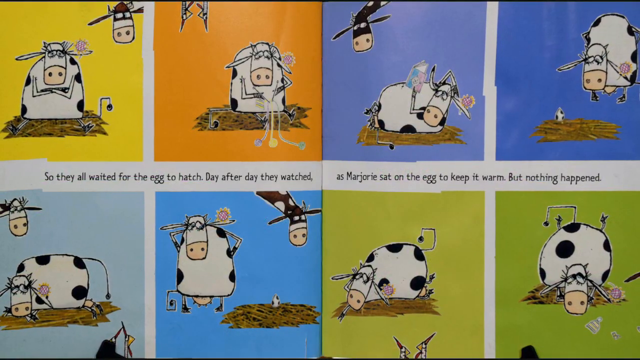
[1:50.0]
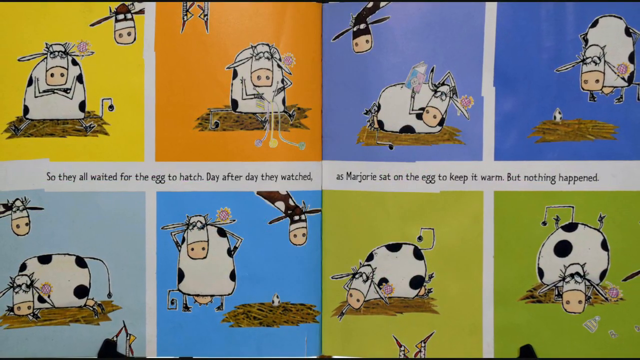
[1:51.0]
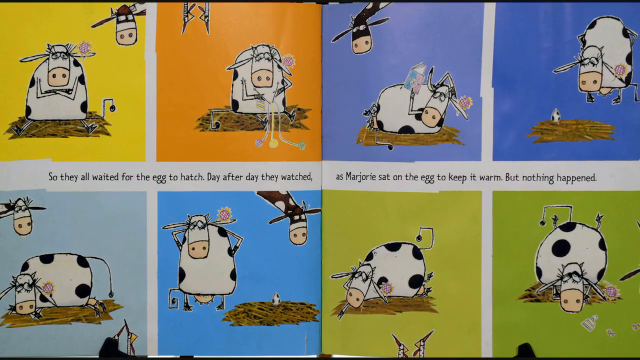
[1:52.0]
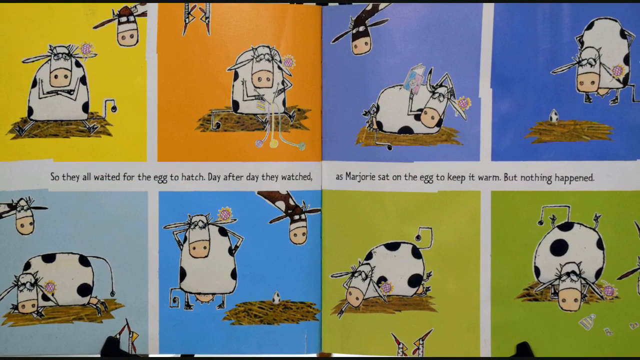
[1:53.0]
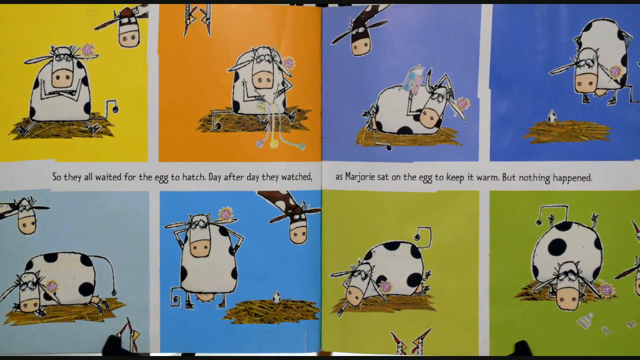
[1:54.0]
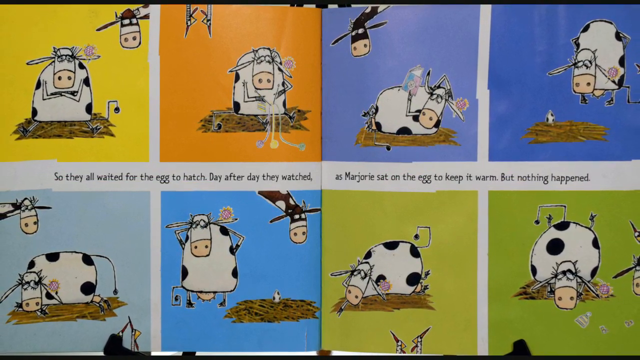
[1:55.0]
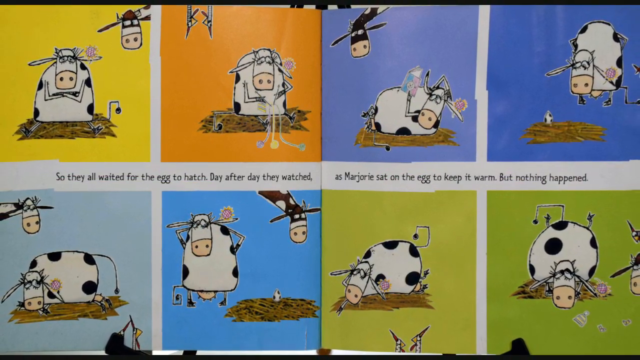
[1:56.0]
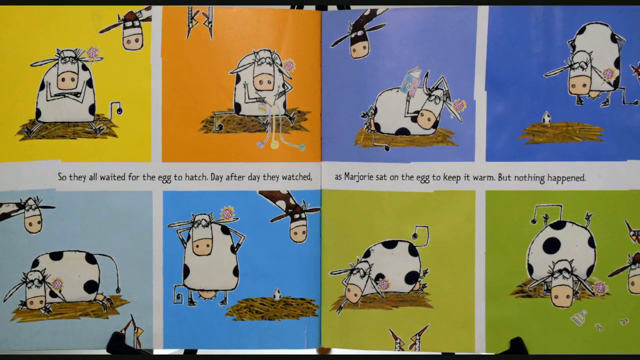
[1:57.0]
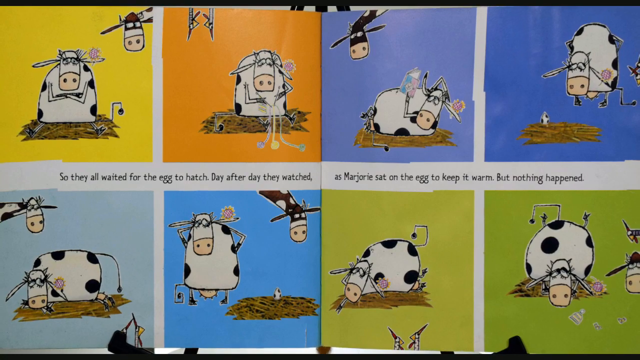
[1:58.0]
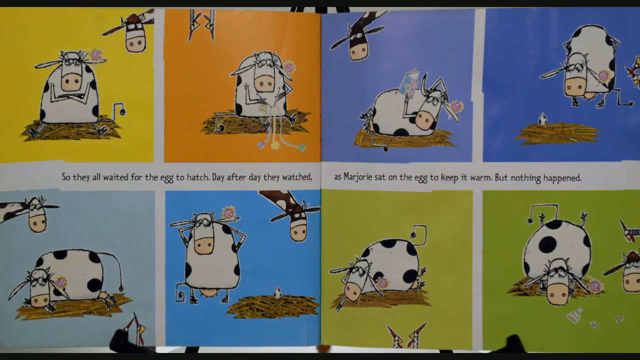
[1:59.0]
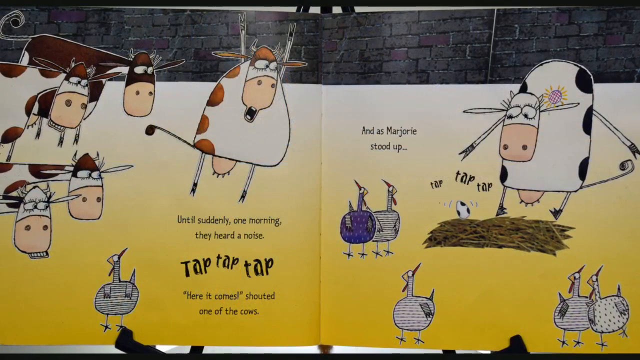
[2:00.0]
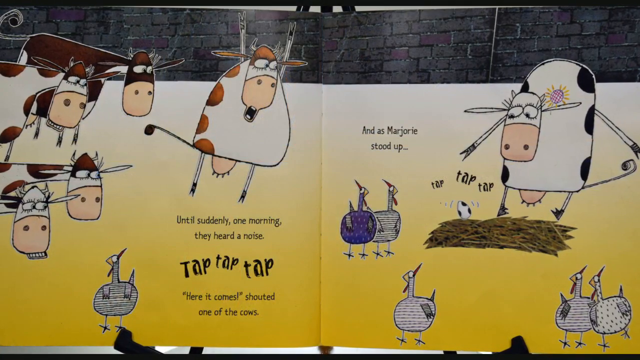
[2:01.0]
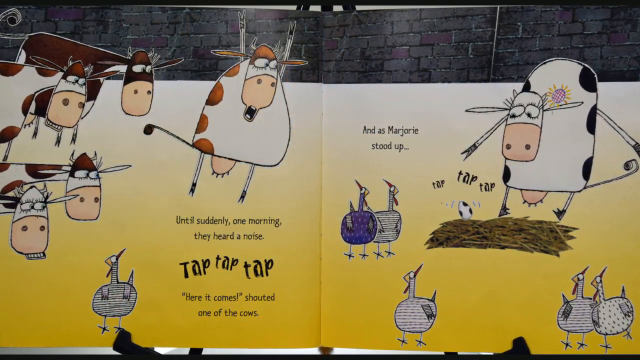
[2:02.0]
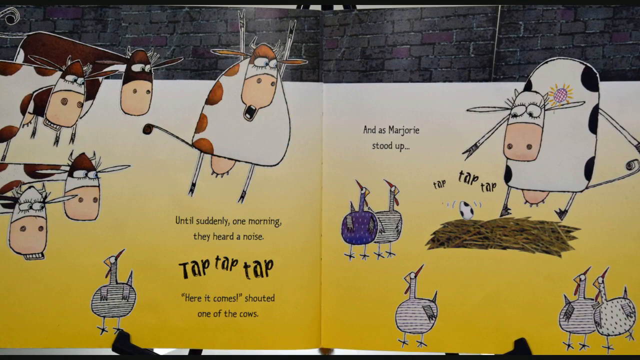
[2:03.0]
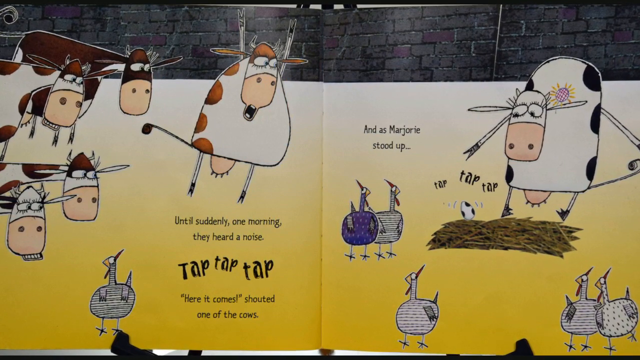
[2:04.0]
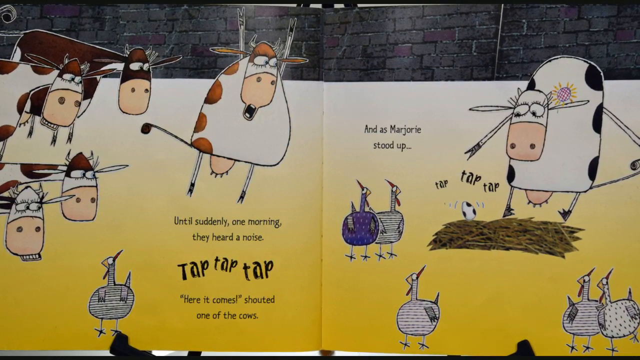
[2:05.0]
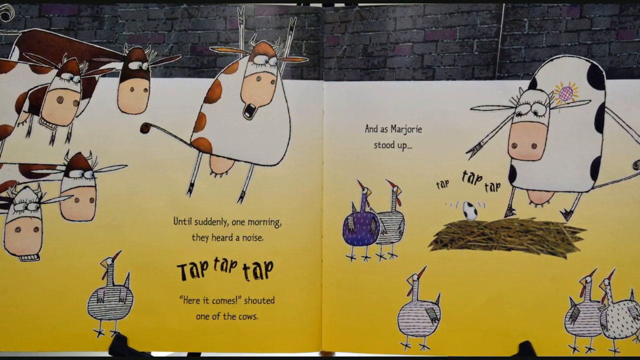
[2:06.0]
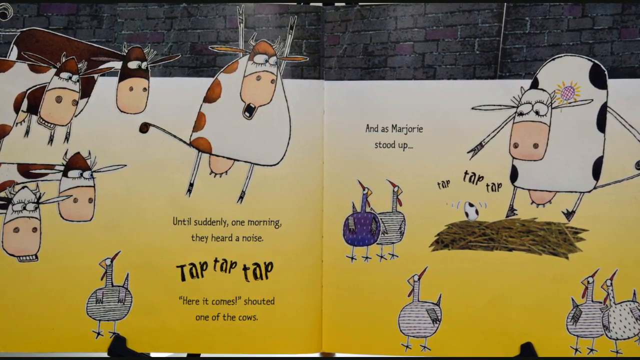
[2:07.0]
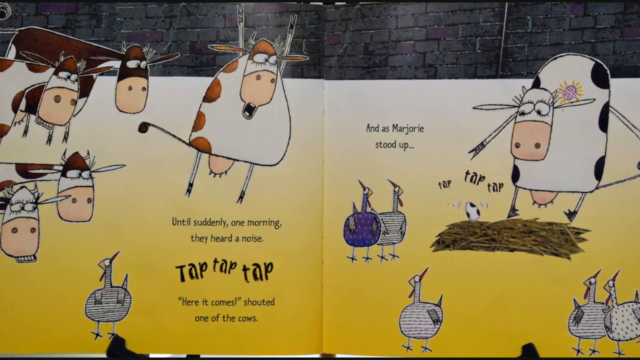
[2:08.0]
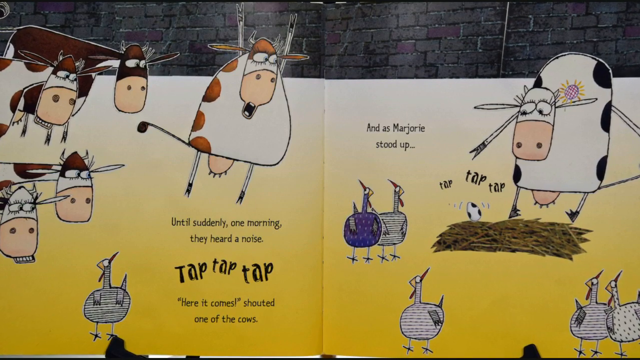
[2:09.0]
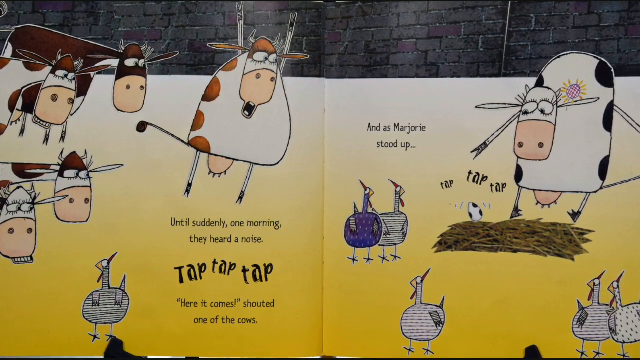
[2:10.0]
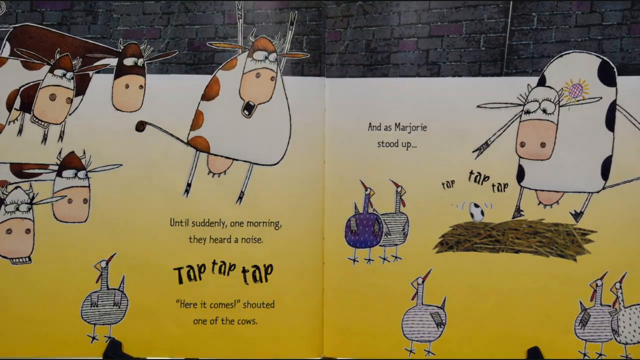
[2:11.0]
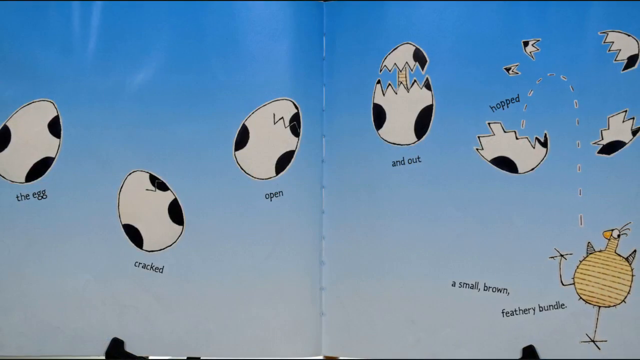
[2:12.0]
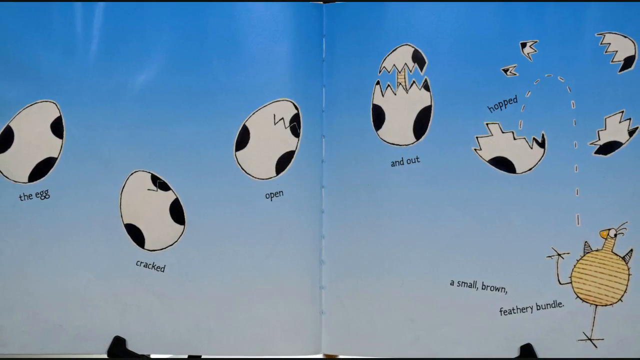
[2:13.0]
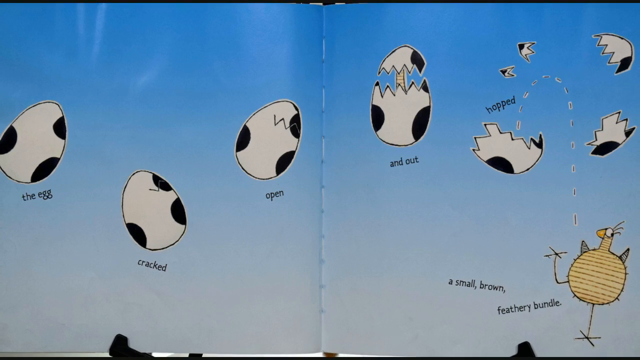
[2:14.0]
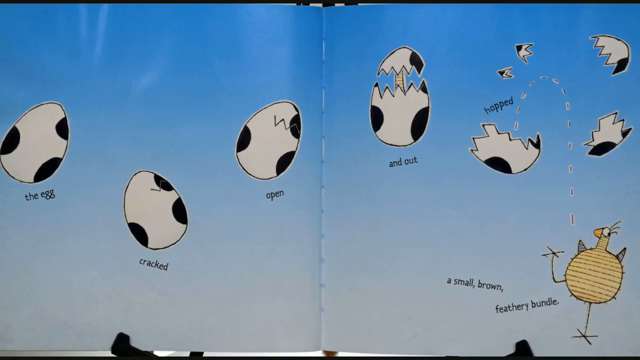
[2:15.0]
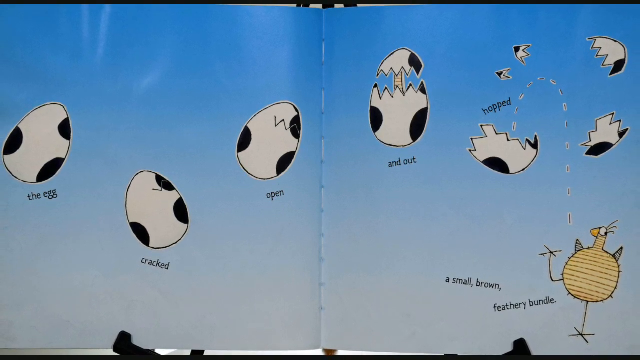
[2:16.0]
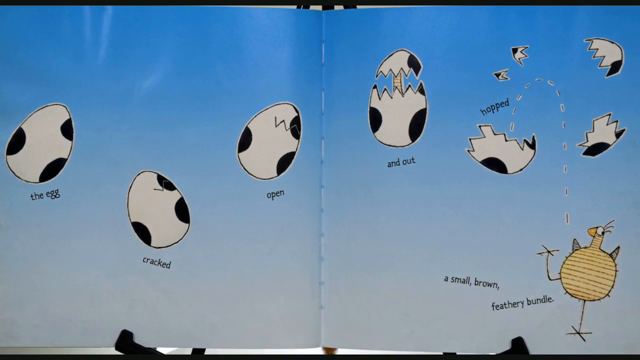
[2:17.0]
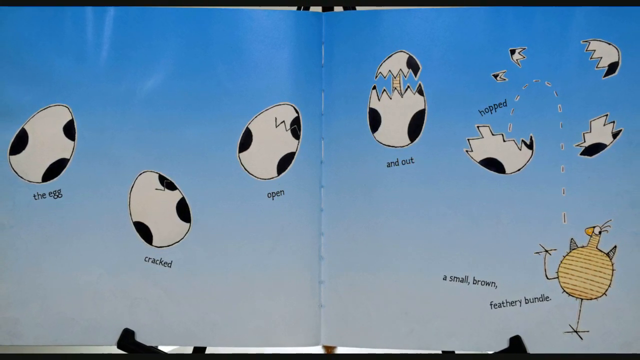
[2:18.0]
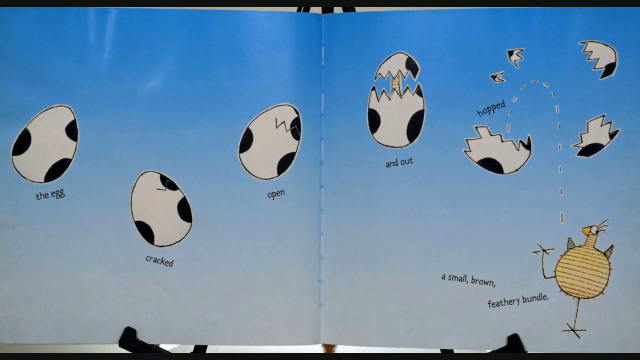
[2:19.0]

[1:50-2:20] On the next page of the book the background is yellow and then orange, and Marjorie is sitting on the egg. The text reads "So they all waited for the egg to hatch. Day after day they watched as Marjorie sat on the egg to keep it warm, but nothing happened." Marjorie sits looking very bored and tired, reading a book and apparently knitting while she waits for the egg to hatch. The next page reads "Until suddenly one morning they heard a noise. Tap, tap, tap. Here it comes, shouted one of the cows." Marjorie stands up and looks at the egg, which is moving, while four chickens and five cows also watch. The text reads "the egg cracked open and out hopped a small feathered bundle," and the little creature pops out.